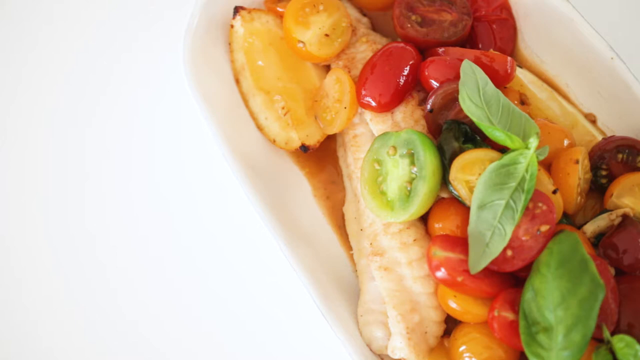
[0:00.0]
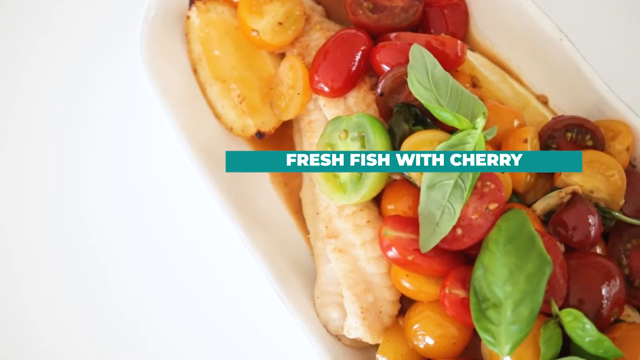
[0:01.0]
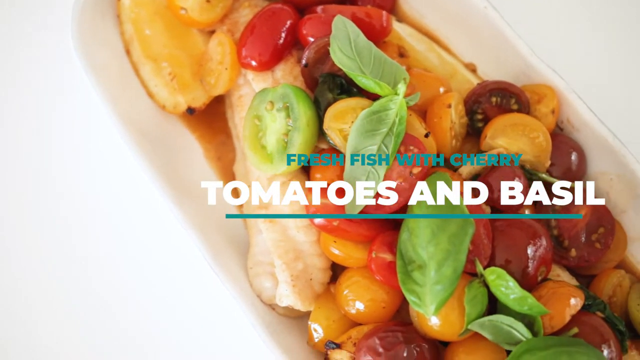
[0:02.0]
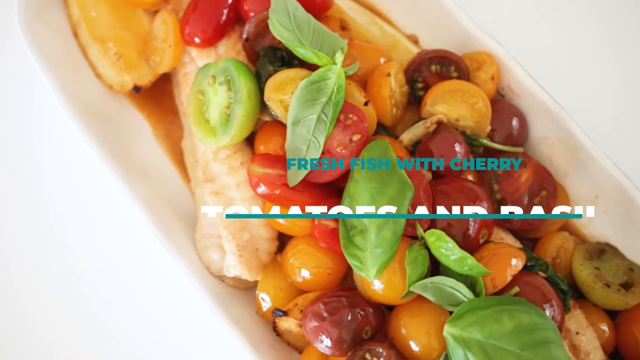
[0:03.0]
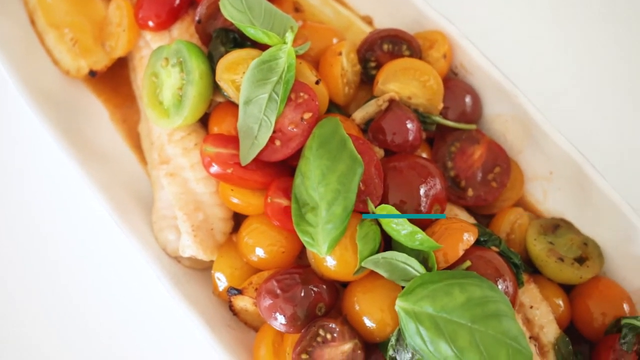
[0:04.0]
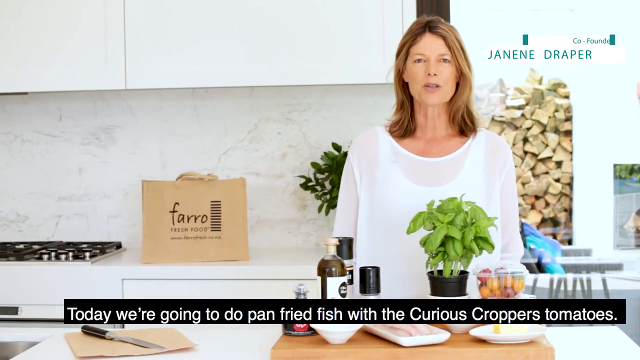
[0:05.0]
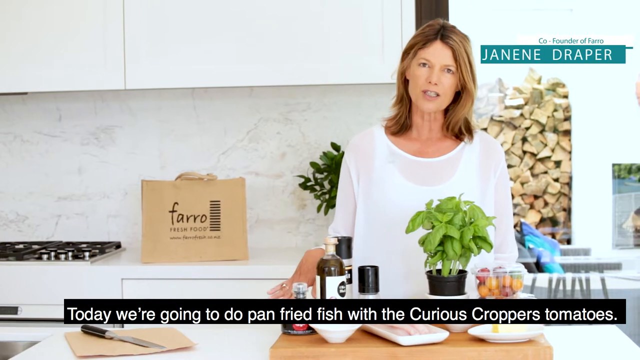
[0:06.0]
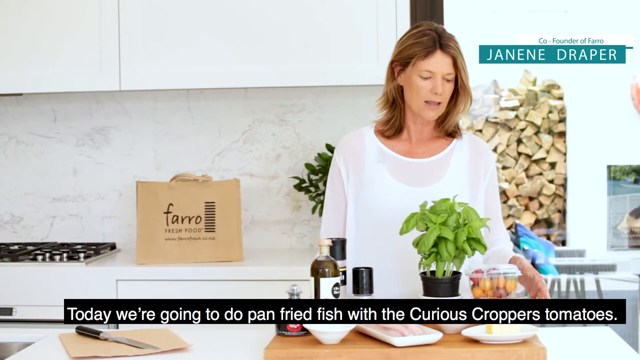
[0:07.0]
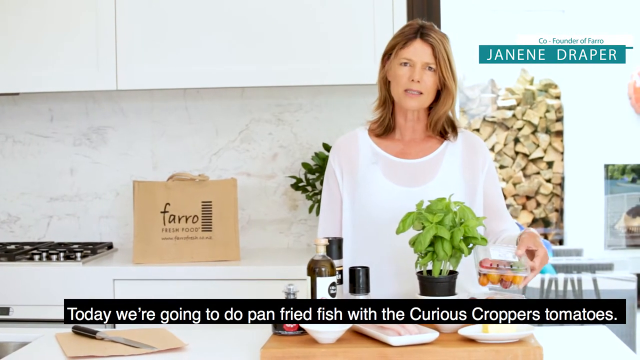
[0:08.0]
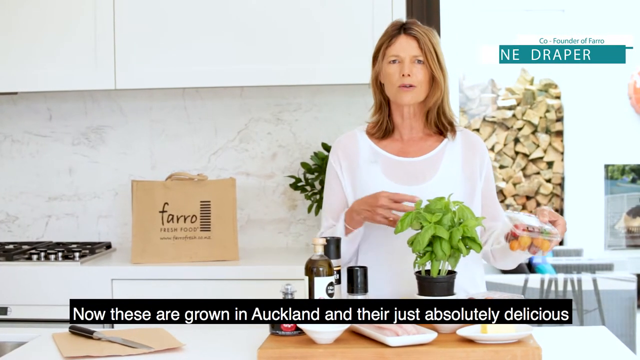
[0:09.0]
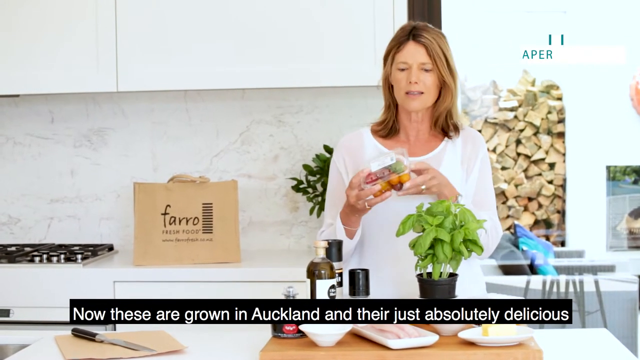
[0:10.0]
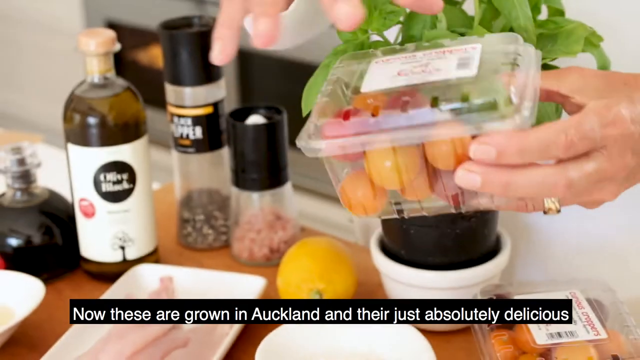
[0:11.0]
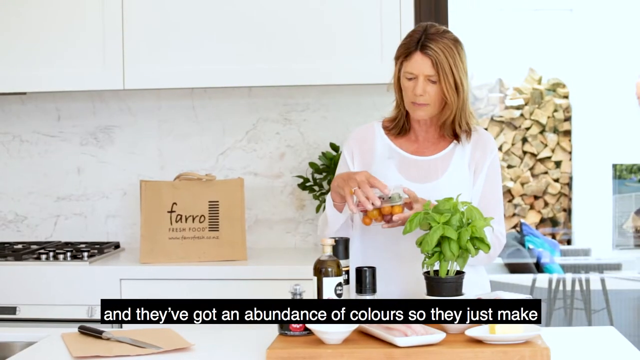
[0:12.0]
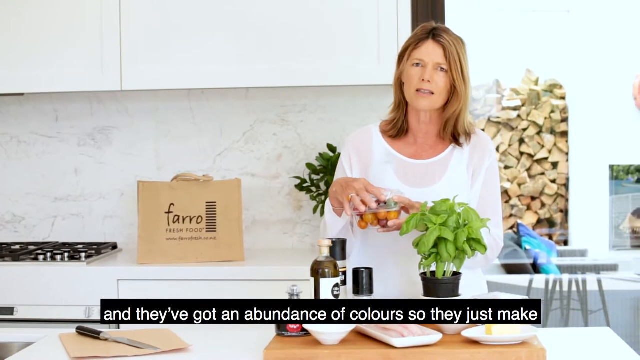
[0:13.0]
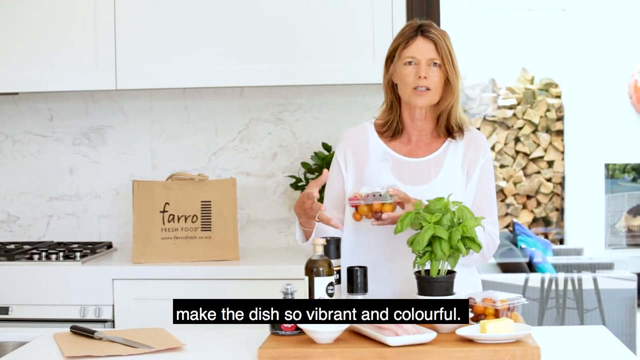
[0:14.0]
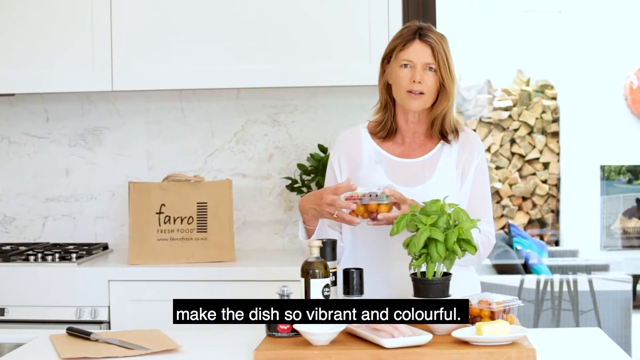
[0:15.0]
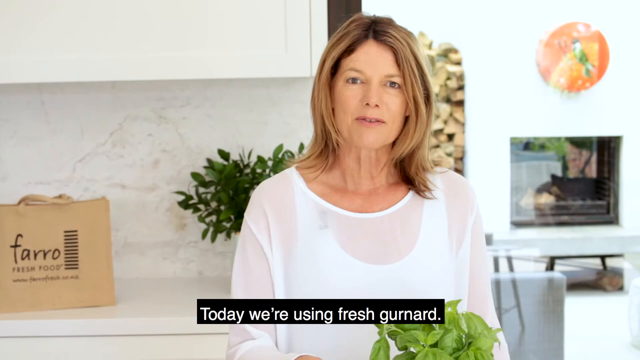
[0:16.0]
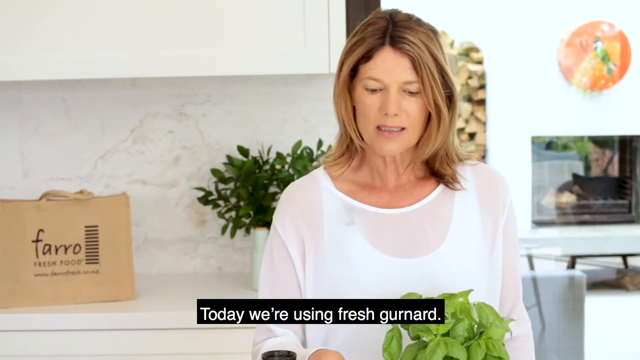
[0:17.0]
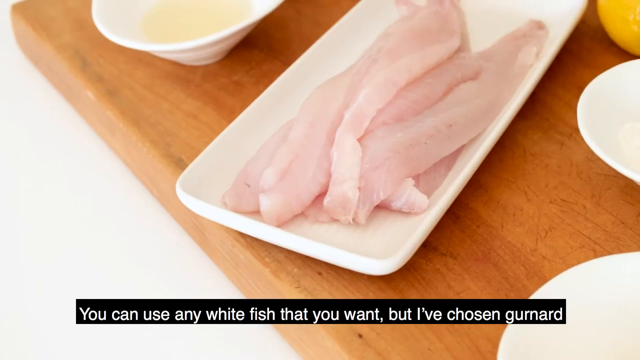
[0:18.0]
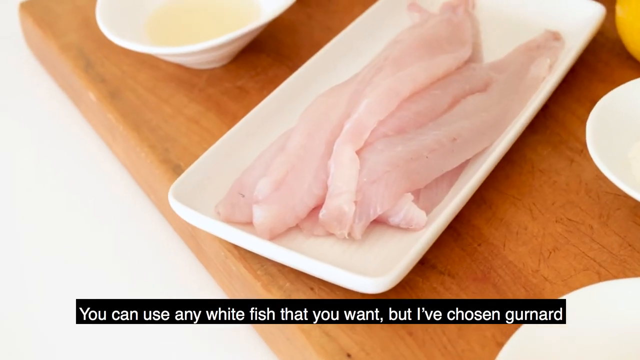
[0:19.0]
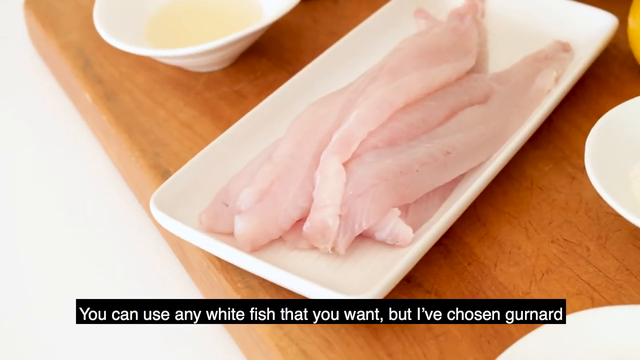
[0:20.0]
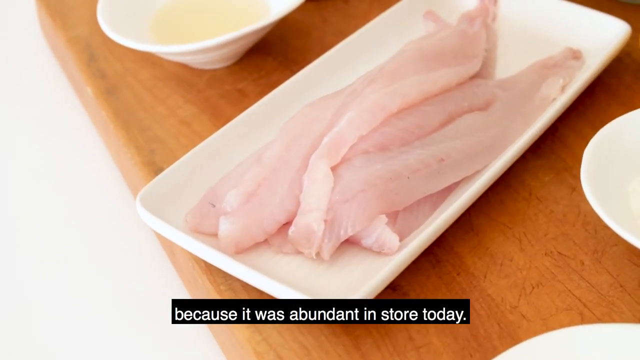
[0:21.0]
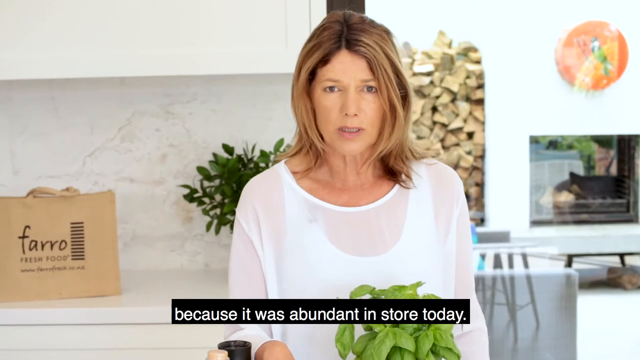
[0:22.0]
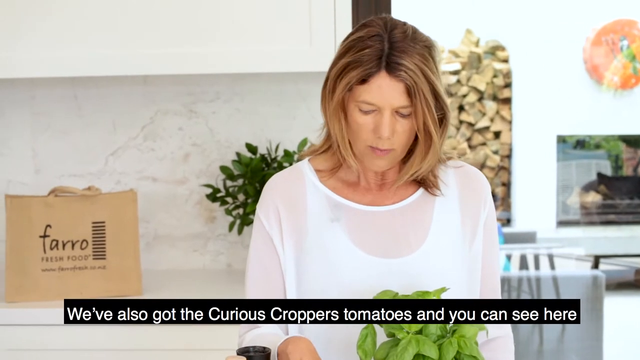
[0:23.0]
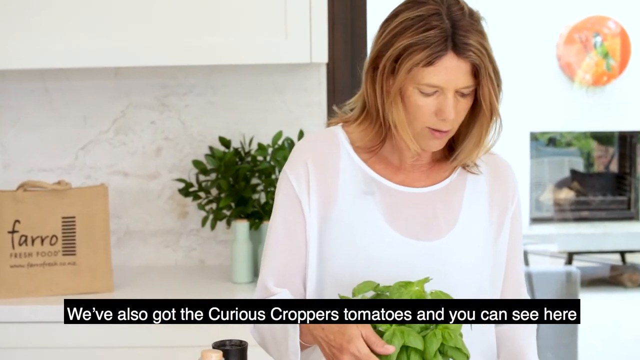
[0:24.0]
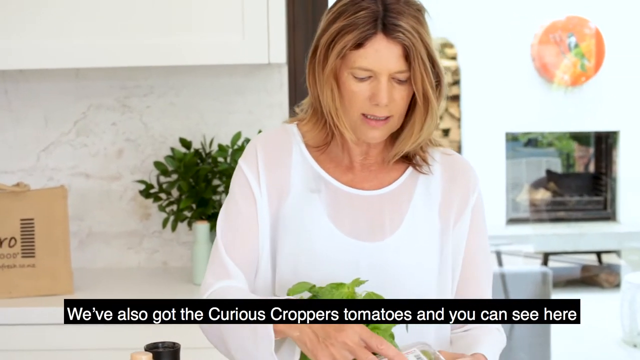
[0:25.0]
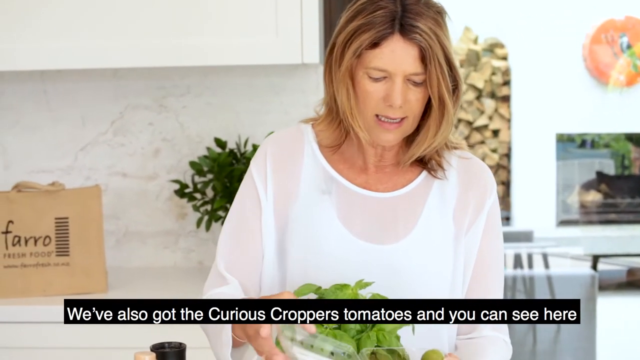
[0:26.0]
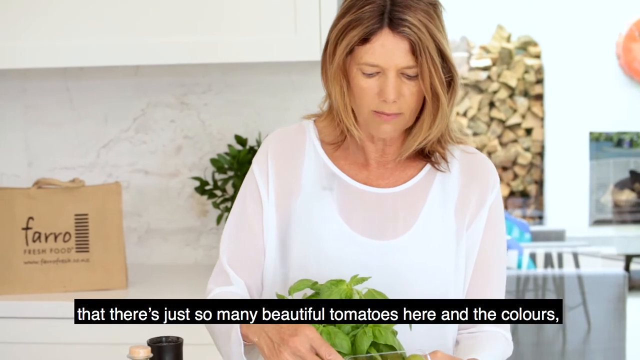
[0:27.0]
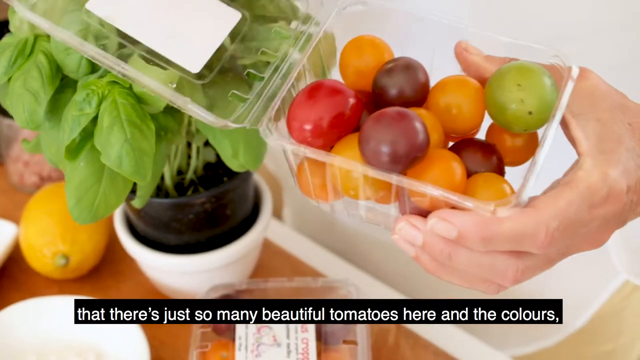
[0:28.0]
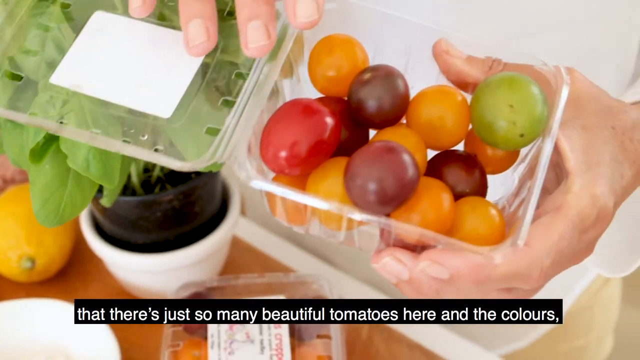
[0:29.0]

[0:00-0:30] The video is a cooking vlog from the YouTube cooking channel of a host named Janine Repa. She is in what looks like a kitchen with white kitchen cupboards and flowers, a paper shopping bag of some sort, and chairs on the side. The host, who has blonde hair, wears a white blouse with a white vest underneath. She has displayed all the ingredients she will use for the dish, with a plant next to the ingredients, and she has a knife and a chopping board. Text appears at the bottom of the screen while she talks.